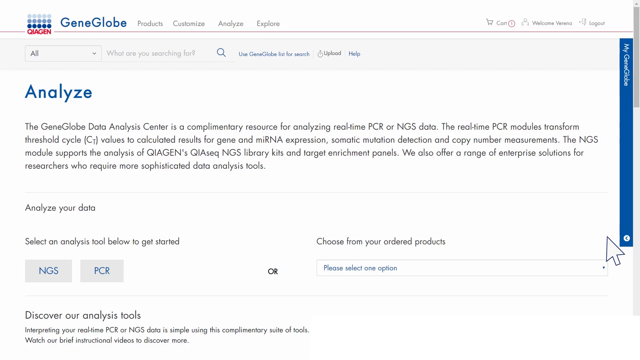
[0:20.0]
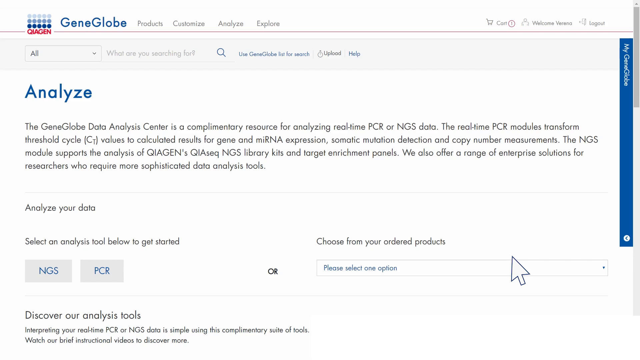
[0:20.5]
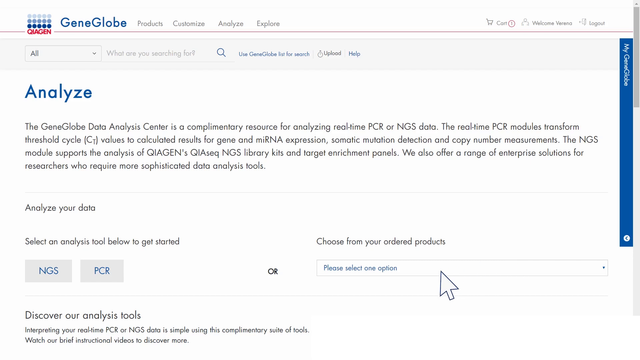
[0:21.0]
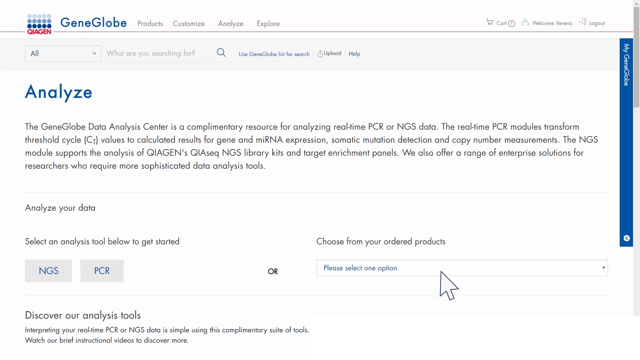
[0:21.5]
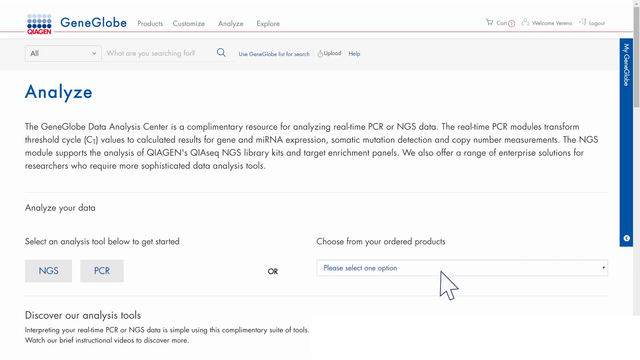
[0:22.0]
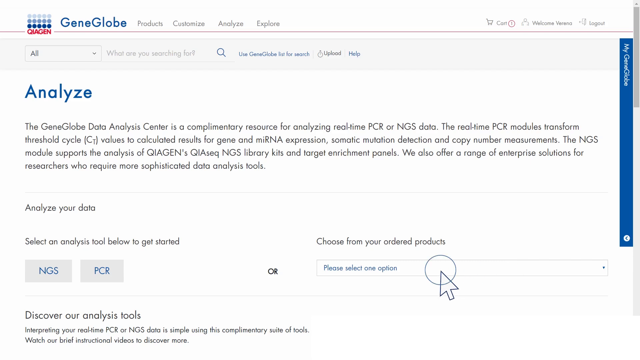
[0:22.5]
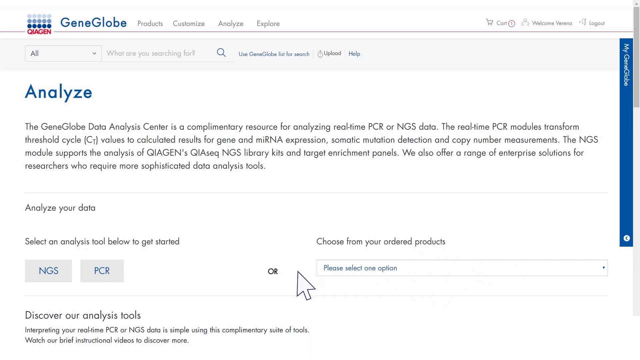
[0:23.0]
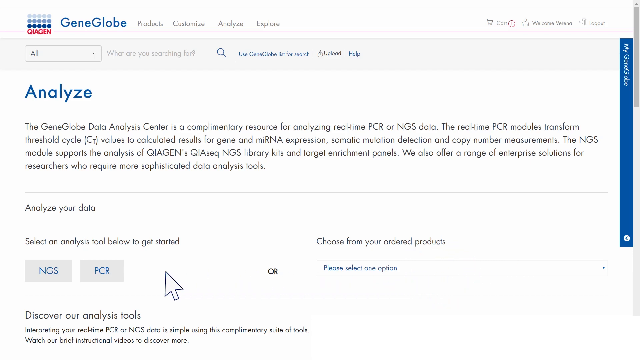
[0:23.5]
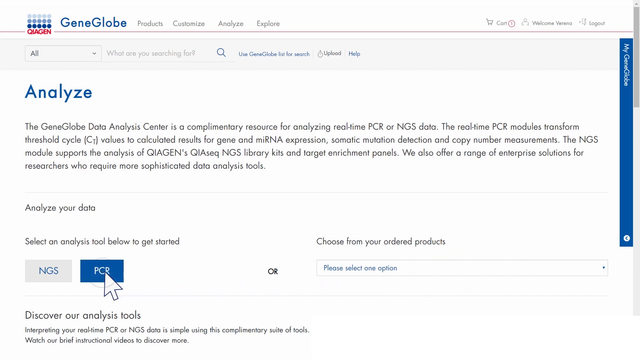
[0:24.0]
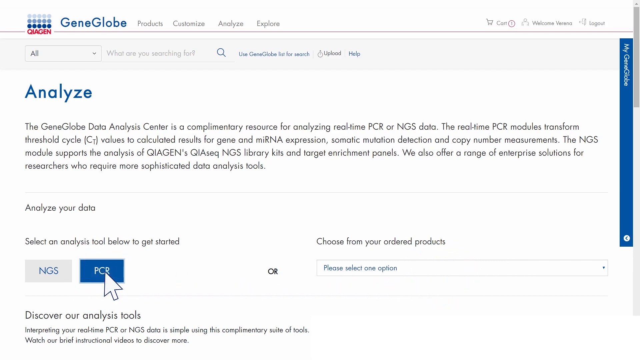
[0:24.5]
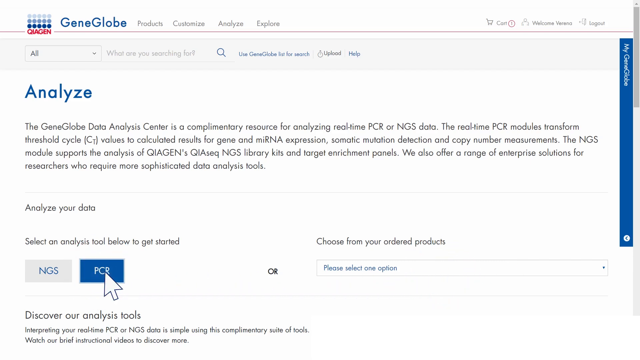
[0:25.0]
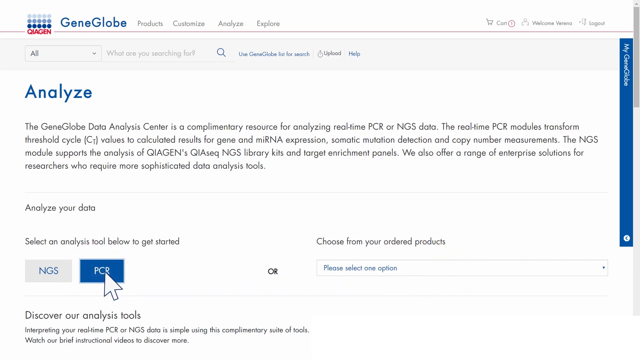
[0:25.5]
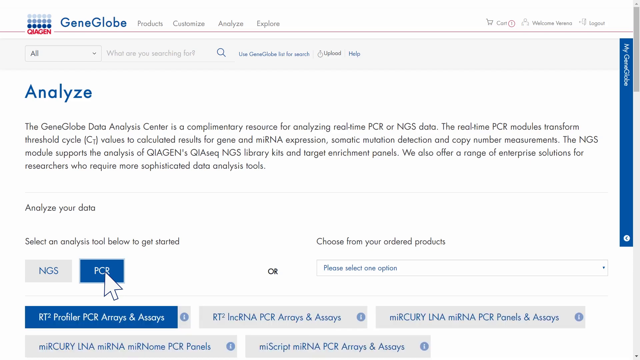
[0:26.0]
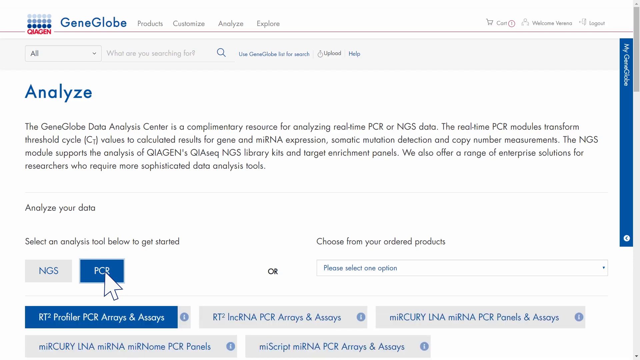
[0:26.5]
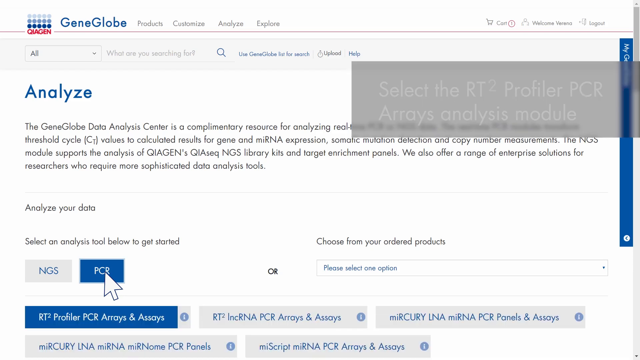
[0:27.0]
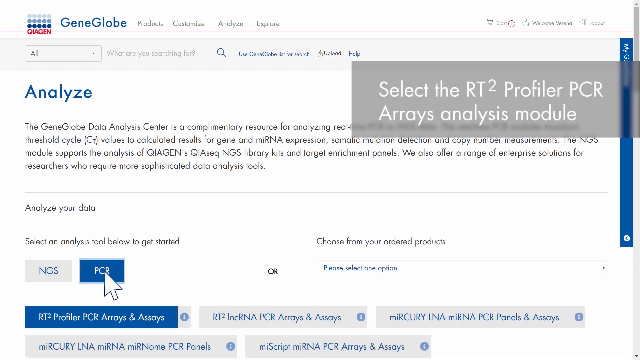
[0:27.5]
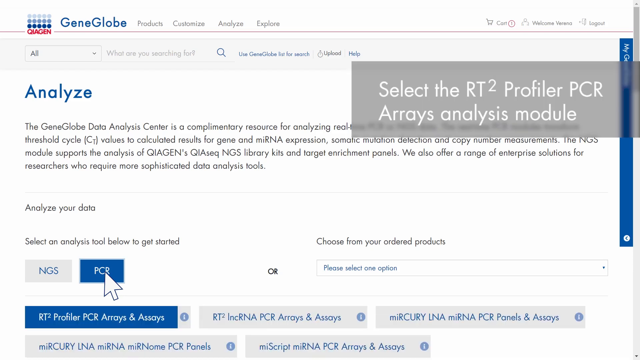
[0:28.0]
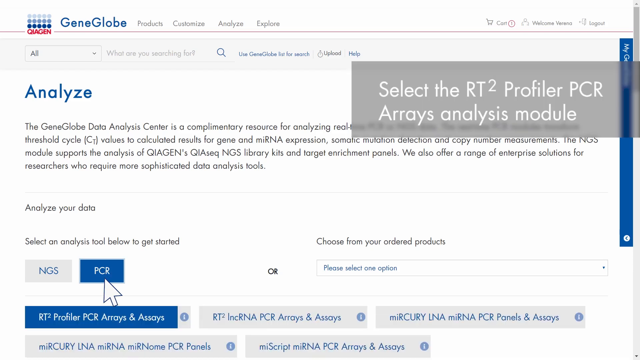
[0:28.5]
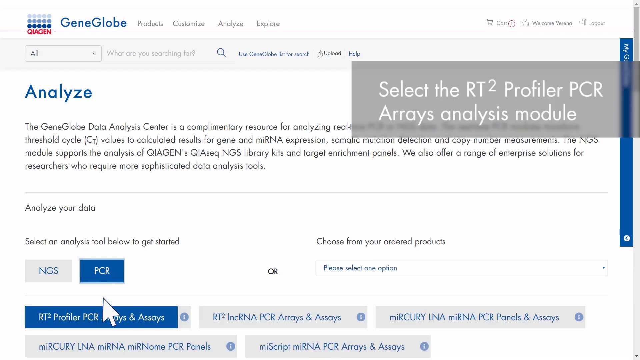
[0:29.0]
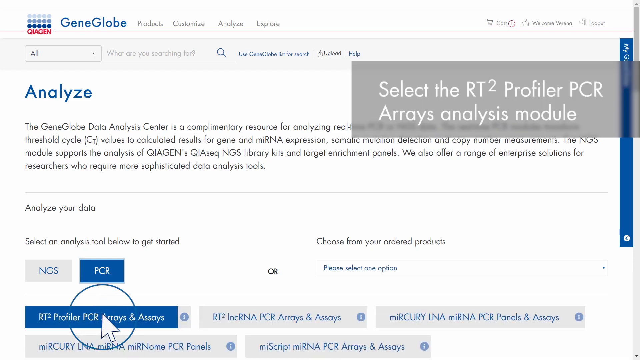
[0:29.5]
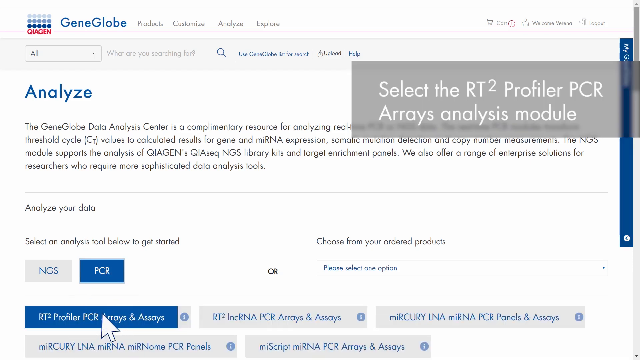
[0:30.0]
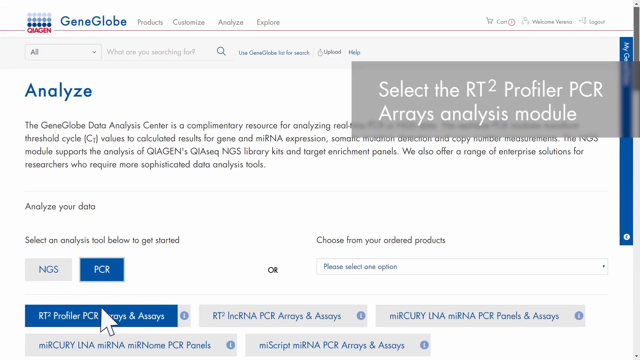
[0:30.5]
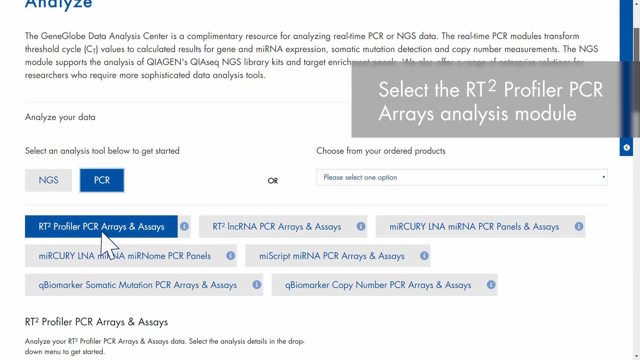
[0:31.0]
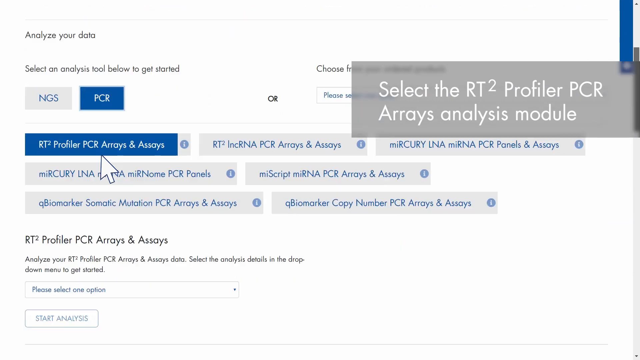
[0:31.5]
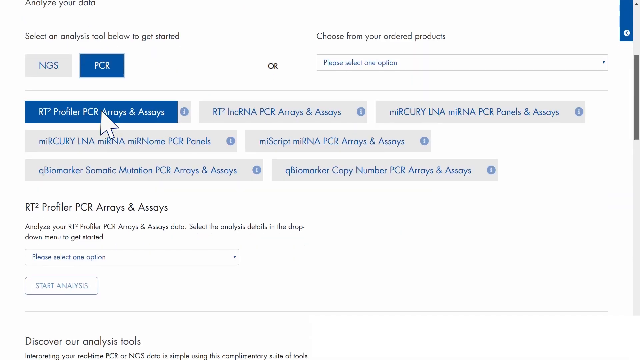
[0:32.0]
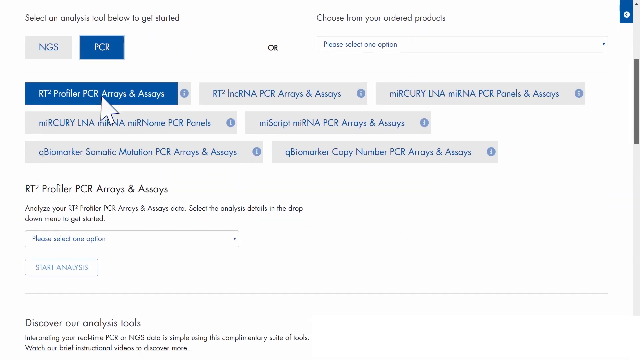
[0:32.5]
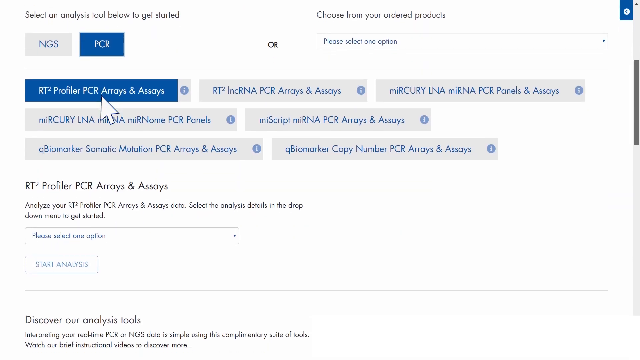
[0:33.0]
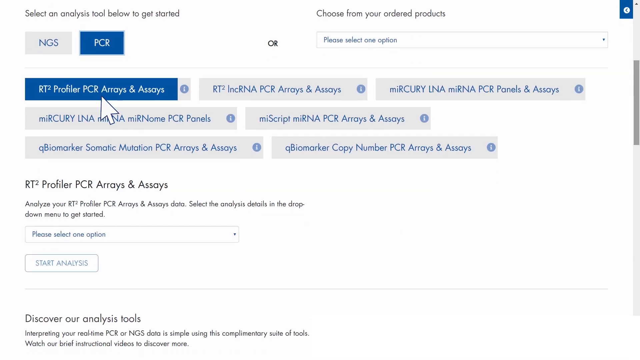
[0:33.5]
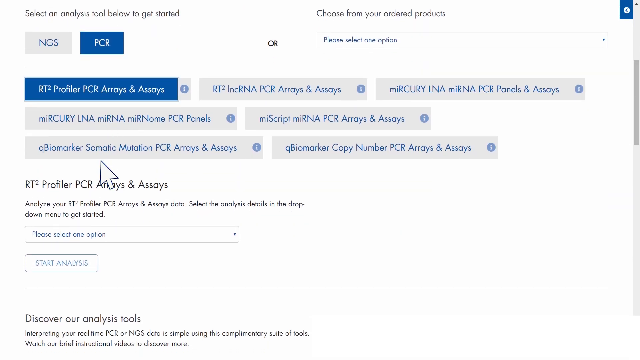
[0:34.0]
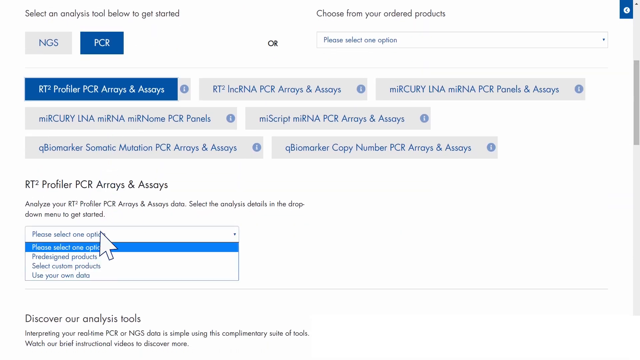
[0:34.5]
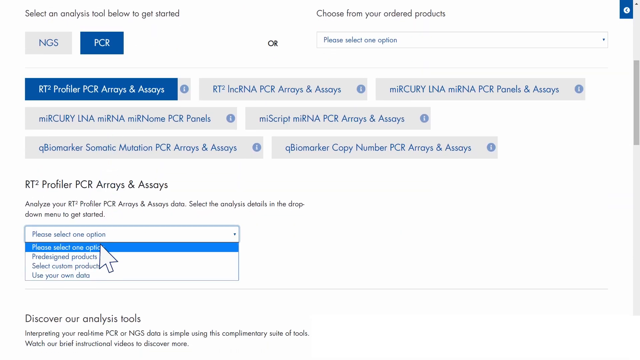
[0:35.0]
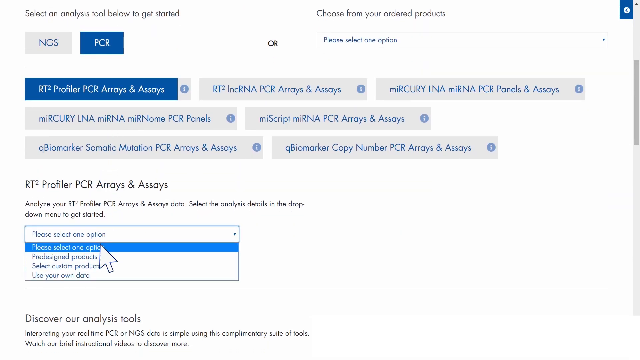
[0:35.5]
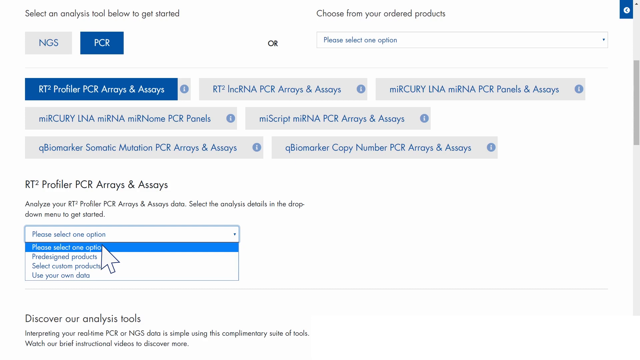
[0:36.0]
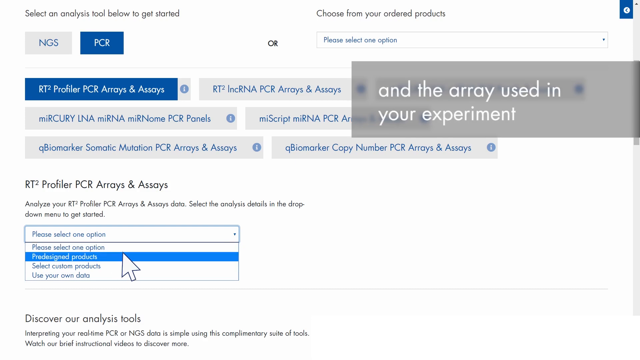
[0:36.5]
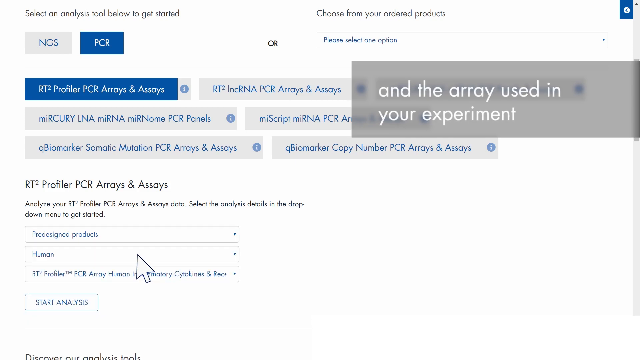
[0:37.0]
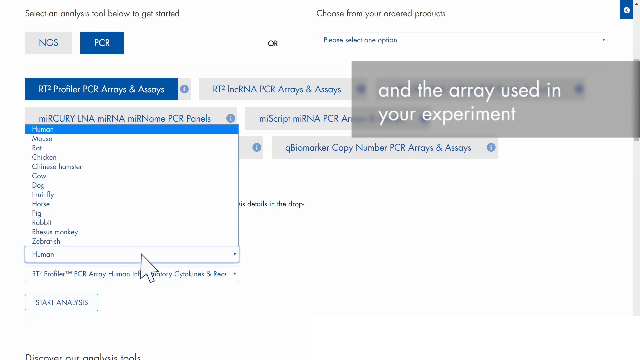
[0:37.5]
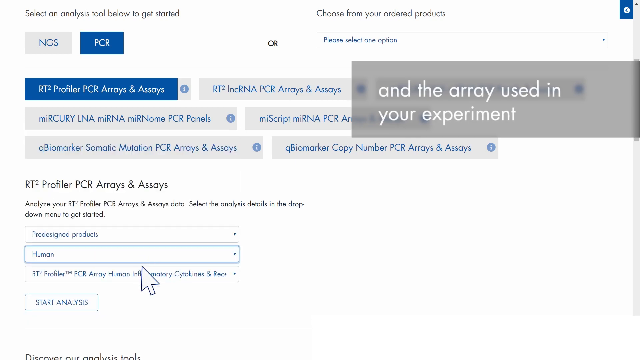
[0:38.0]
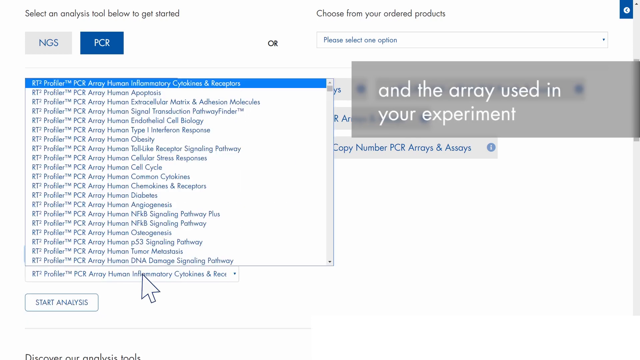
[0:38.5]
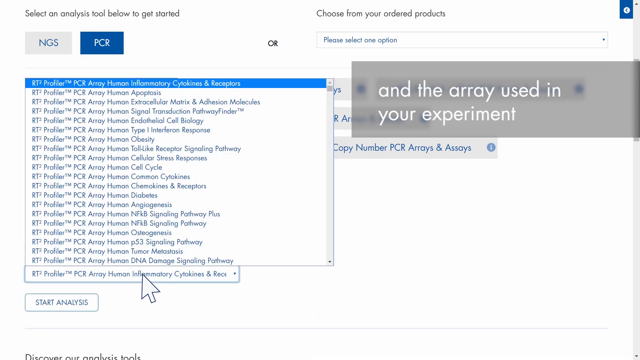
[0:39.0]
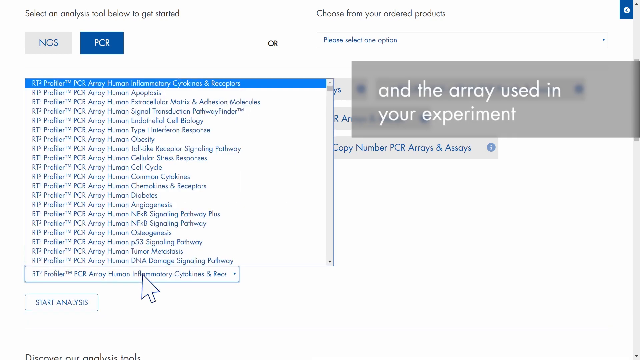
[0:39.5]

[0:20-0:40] A section of the website about analysis opens. Text below says "the DataGlobe Data Analysis Center is a complementary resource for analyzing real-time PCR or NGS data. The real-time PCR modules transform threshold cycle values to calculated results for gene and miRNA expression, somatic mutation detection, and copy number measurements." It also states "We also offer a range of enterprise solutions for researchers who require more sophisticated data analysis tools." Below that is "Analyze Your Data. Select an analysis tool below to get started" with two options, NGS and PCR. To the right it says "Choose From Your Ordered Products" with "Please select one option". The mouse pointer appears, clicks the "Please select one" option and selects PCR, and then RT profile PCR arrays and assays are selected.